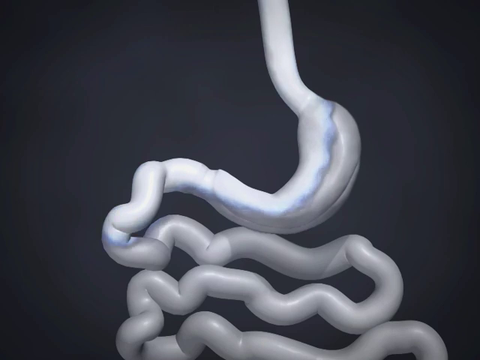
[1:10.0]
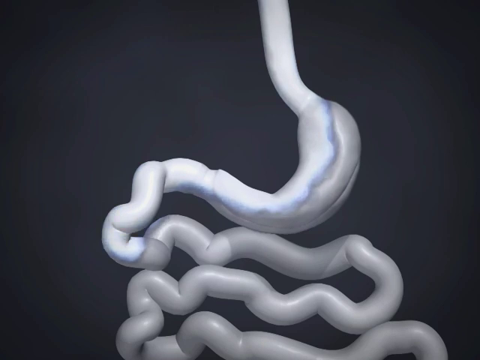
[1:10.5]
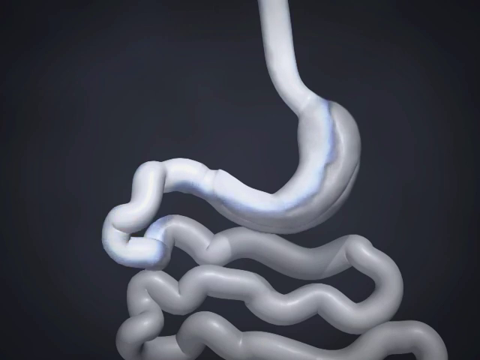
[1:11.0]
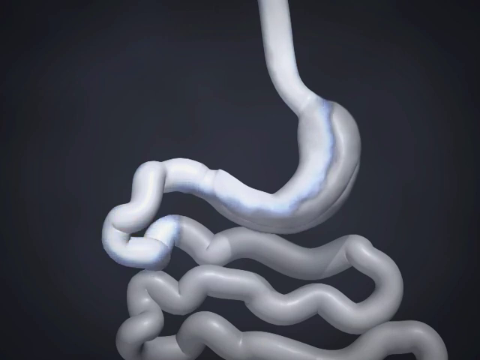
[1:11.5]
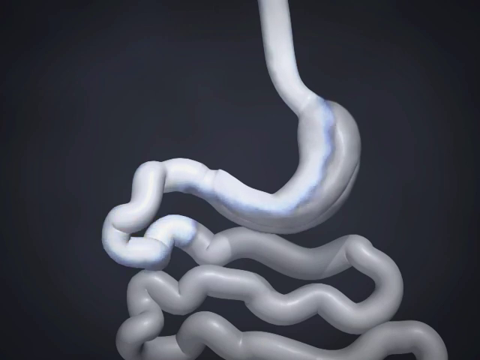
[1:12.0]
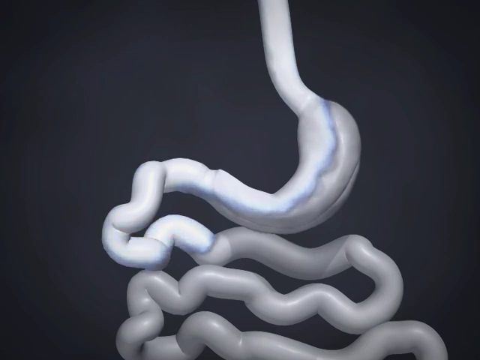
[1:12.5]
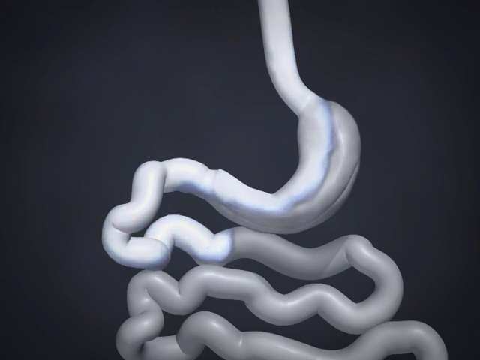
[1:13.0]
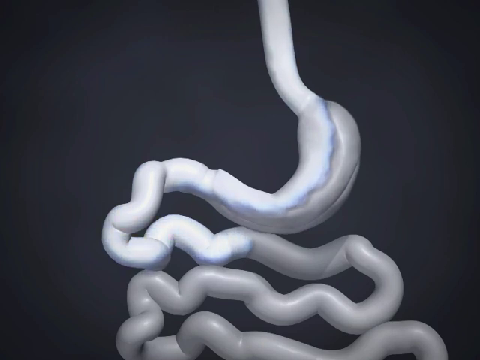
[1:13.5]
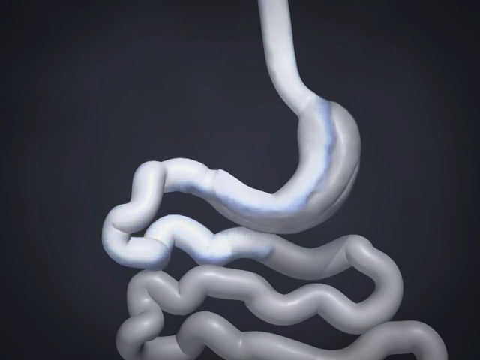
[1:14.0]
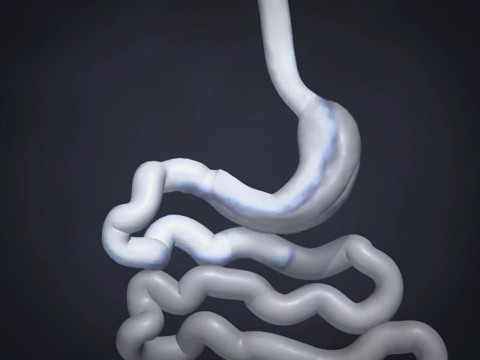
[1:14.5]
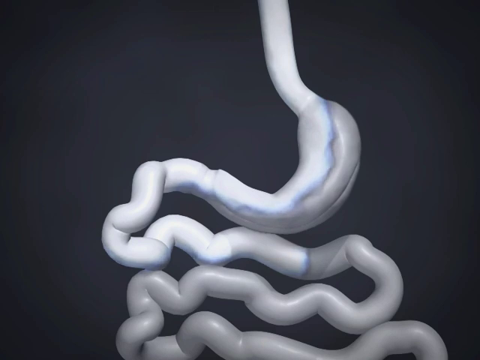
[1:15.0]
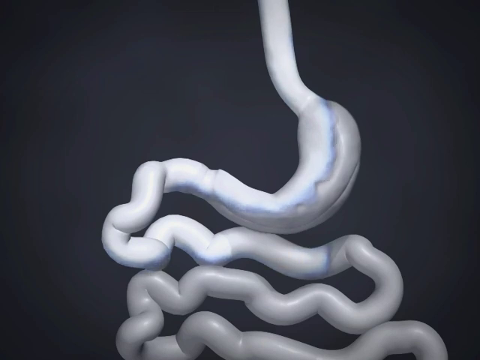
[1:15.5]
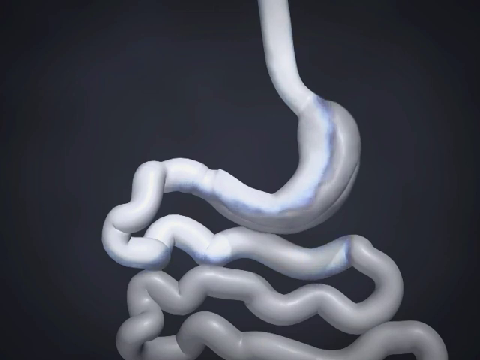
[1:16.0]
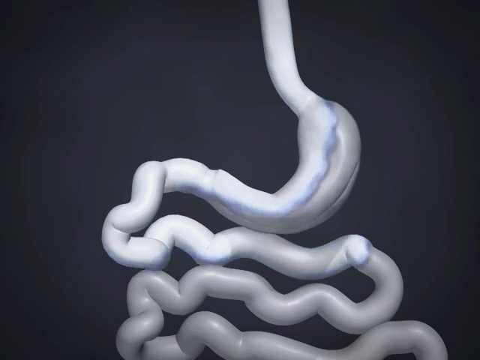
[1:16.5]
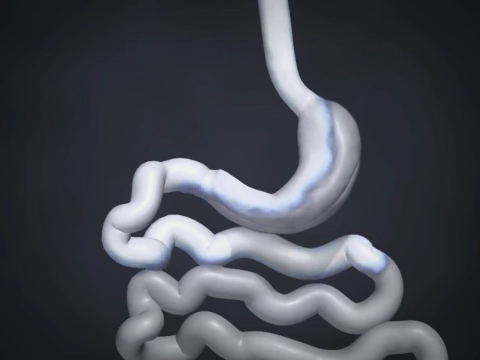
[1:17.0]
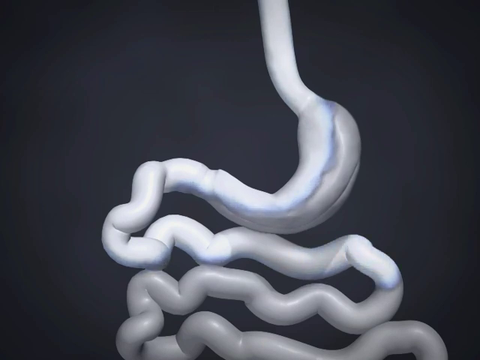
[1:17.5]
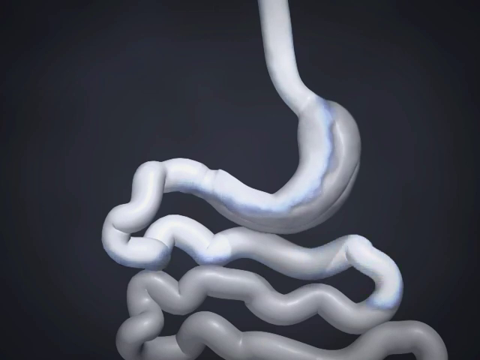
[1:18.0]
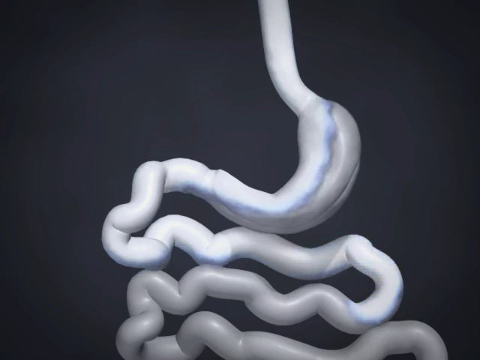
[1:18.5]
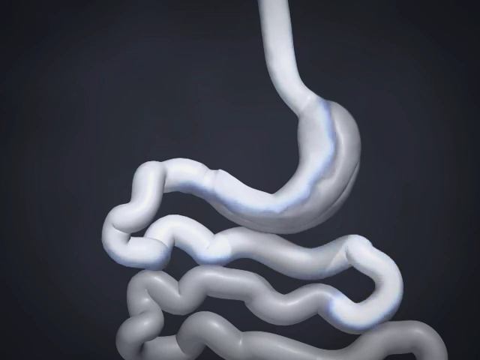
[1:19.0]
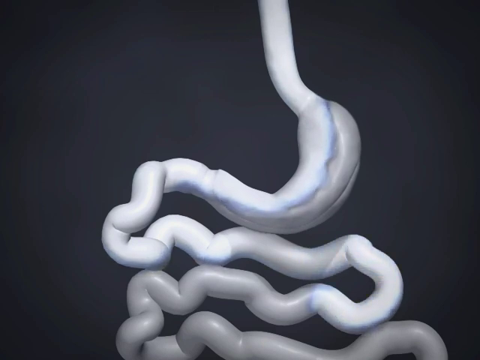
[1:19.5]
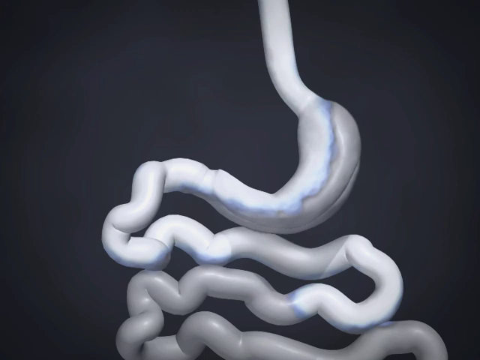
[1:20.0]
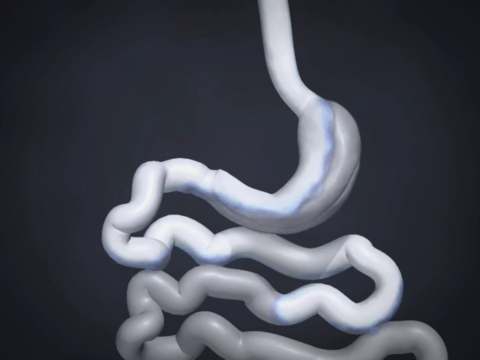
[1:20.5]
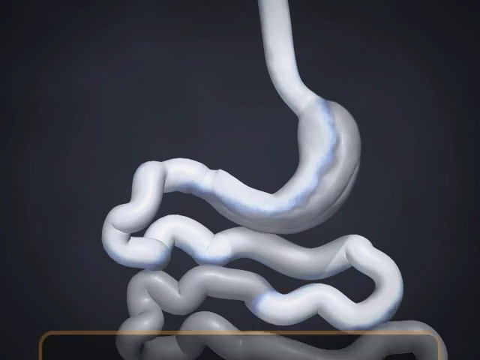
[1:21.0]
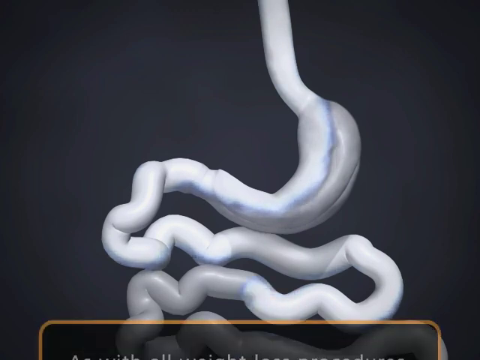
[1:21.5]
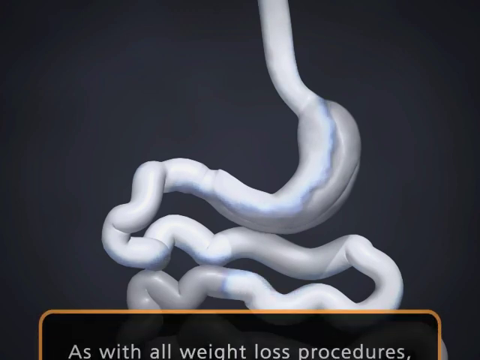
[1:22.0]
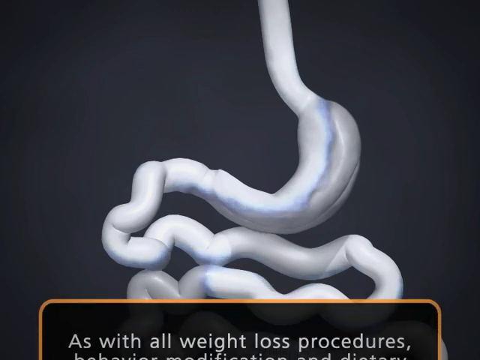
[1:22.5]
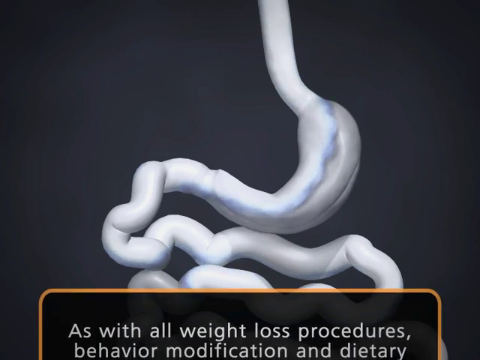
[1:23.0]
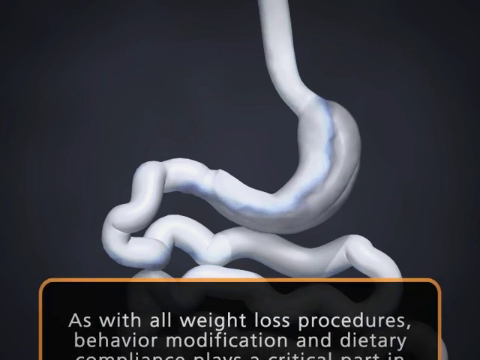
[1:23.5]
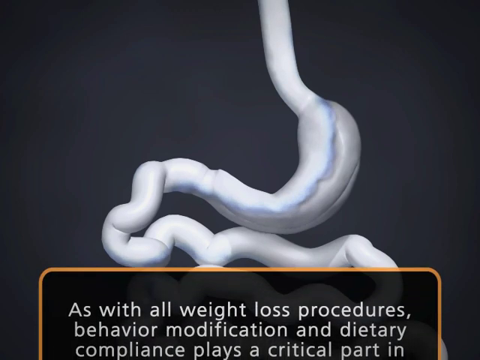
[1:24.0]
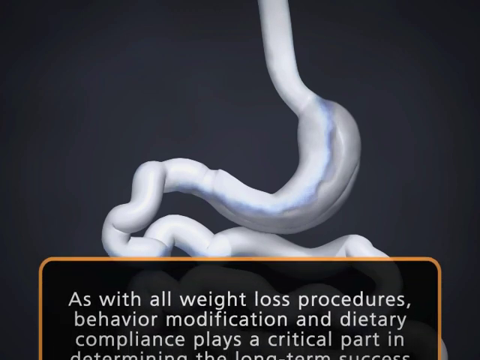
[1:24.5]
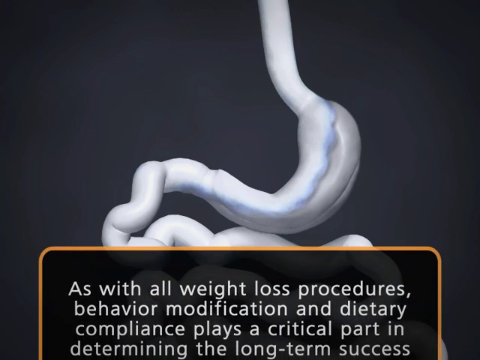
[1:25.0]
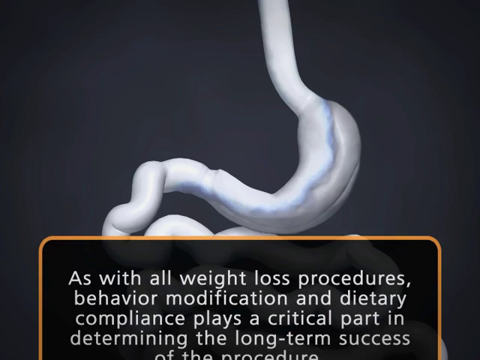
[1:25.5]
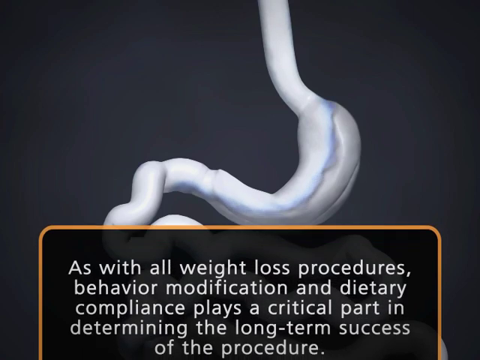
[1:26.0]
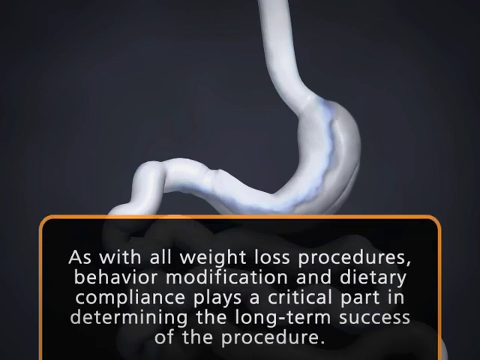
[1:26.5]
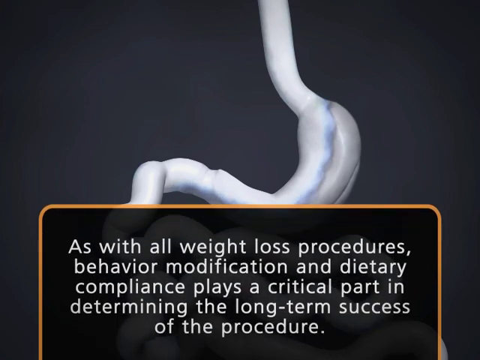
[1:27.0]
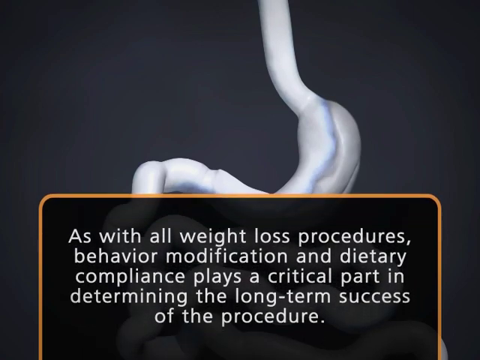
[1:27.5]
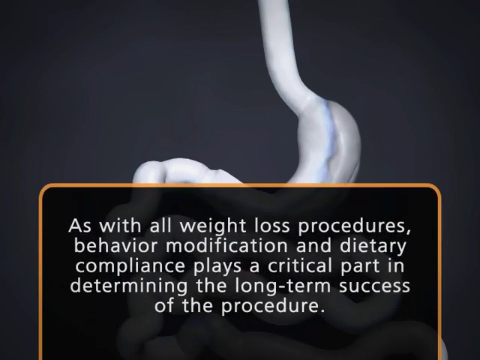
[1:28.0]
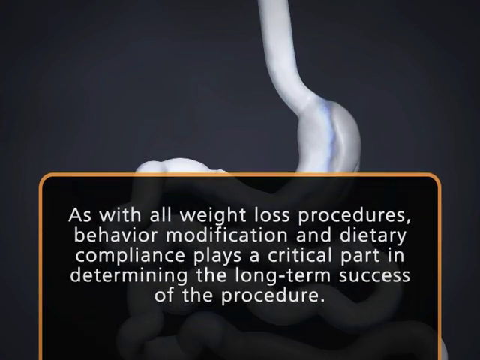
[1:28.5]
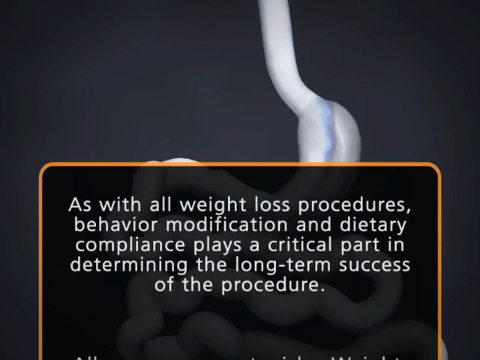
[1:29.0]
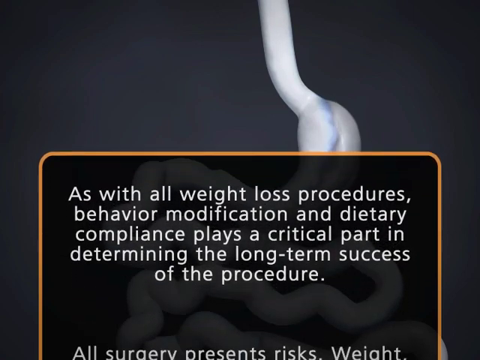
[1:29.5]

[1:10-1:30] Against a black background, the animation apparently shows the intestines below the stomach, very long, with food running through them. Text on the screen reads: "As with all weight loss procedures, behavior modifications and dietary compliance play a critical part in determining the long-term success of the procedure." The text then continues to scroll.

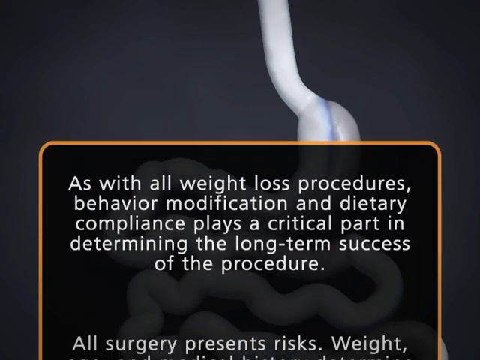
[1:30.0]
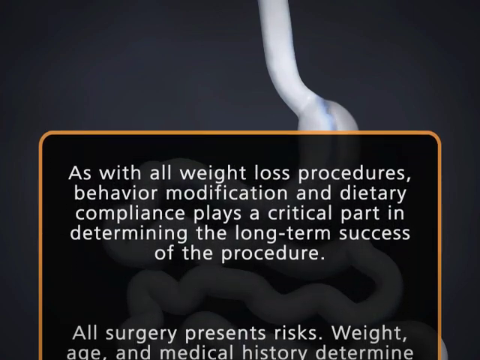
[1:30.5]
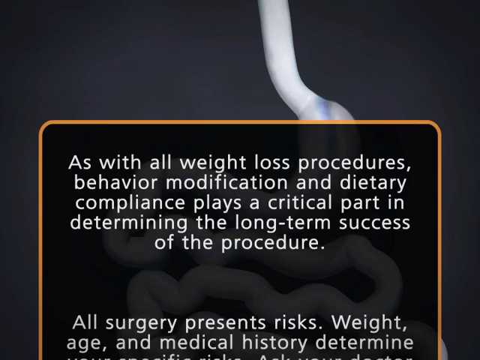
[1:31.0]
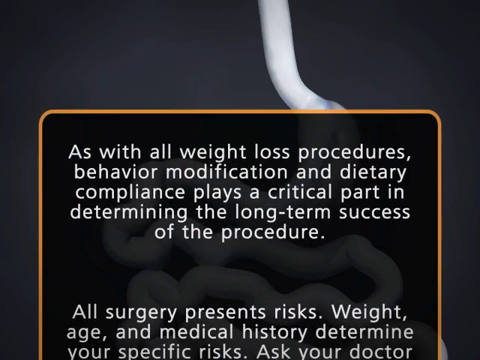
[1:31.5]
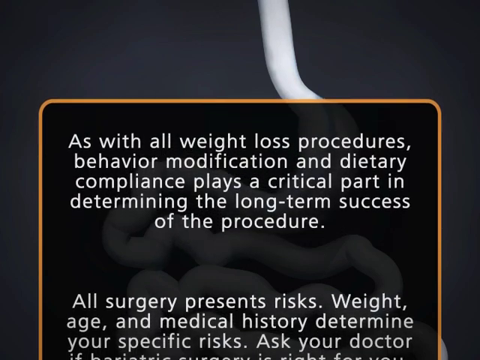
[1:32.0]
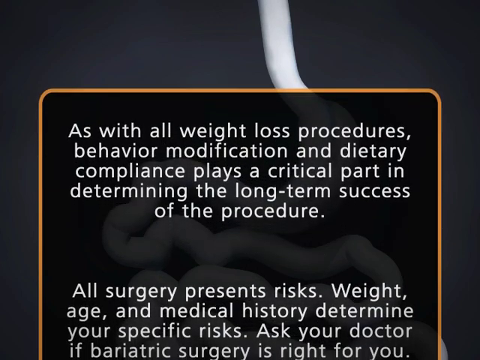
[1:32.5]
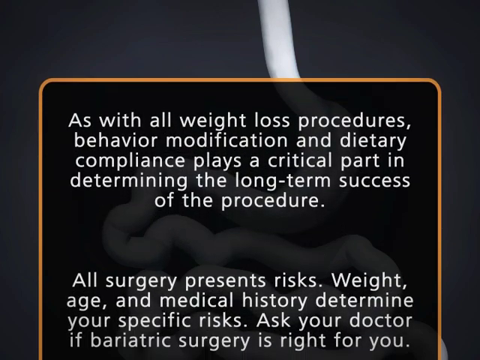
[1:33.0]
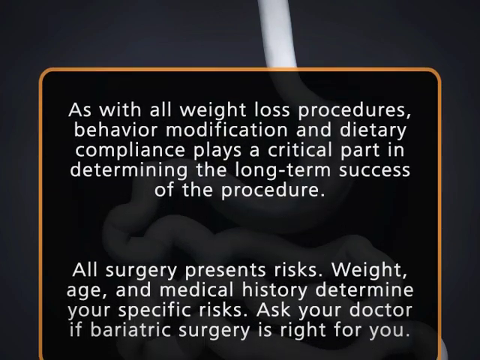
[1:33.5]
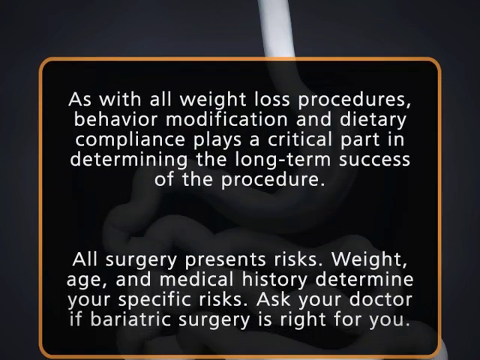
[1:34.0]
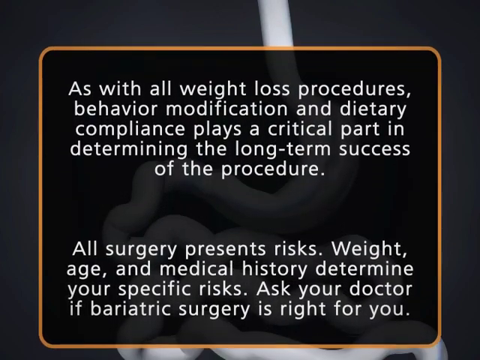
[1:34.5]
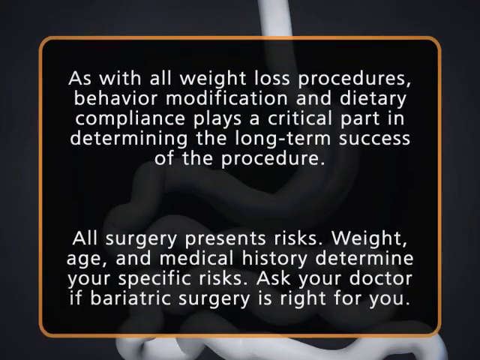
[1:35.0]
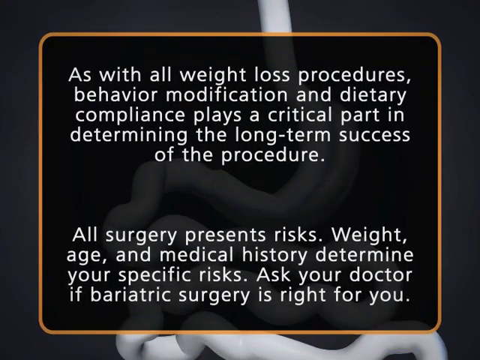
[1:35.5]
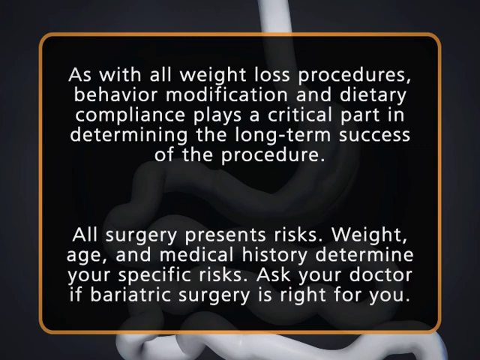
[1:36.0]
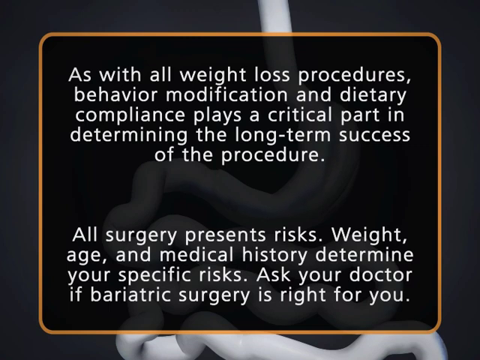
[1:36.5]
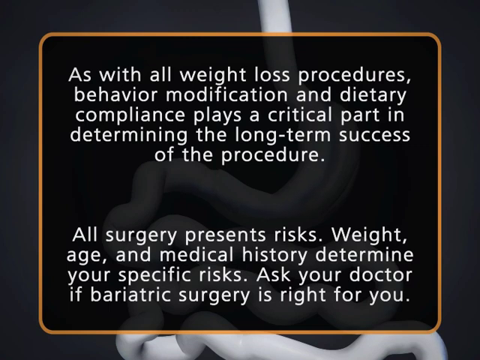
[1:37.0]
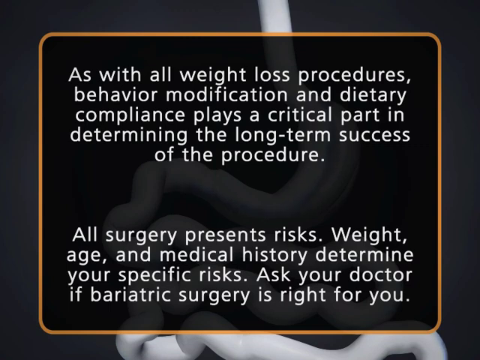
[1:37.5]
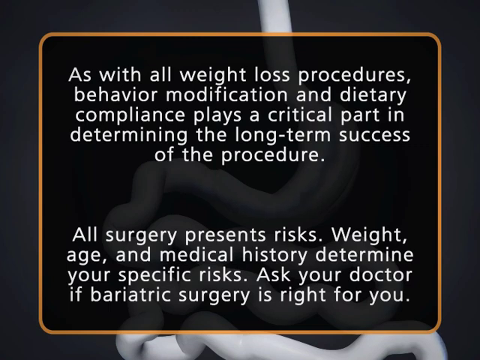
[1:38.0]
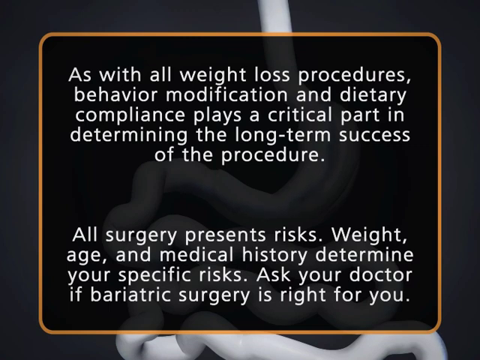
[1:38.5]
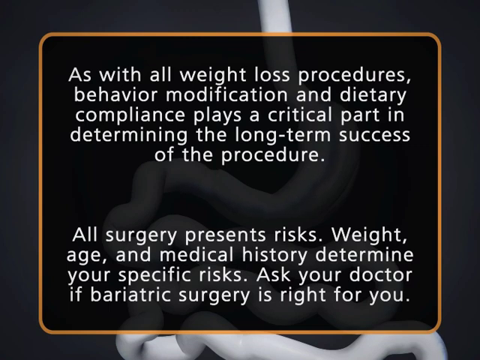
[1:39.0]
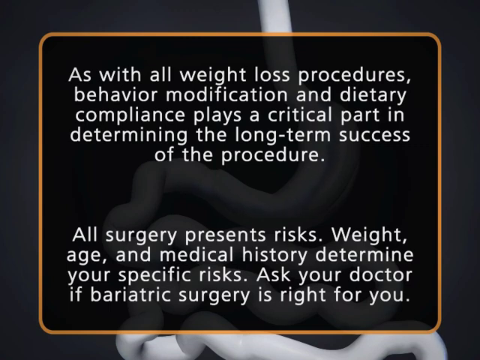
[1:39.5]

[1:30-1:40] White text scrolls inside an orange frame on a black background, continuing: "All surgery presents risk. Weight, age, and medical history determine your specific risk. Ask your doctor if bariatric surgery is right for you." The video is apparently about bariatric surgery.